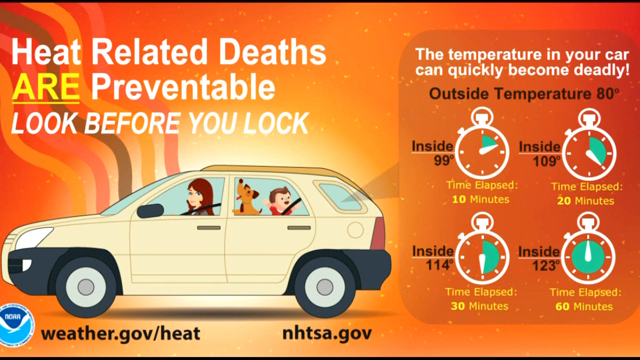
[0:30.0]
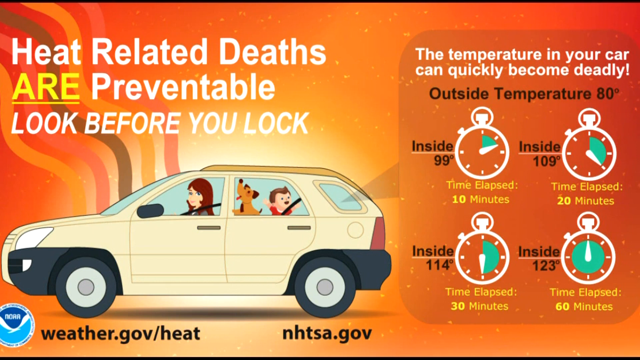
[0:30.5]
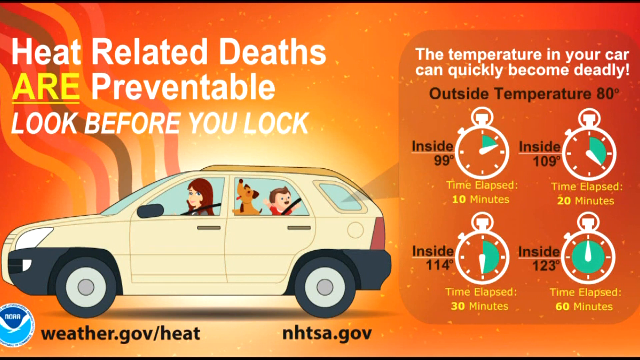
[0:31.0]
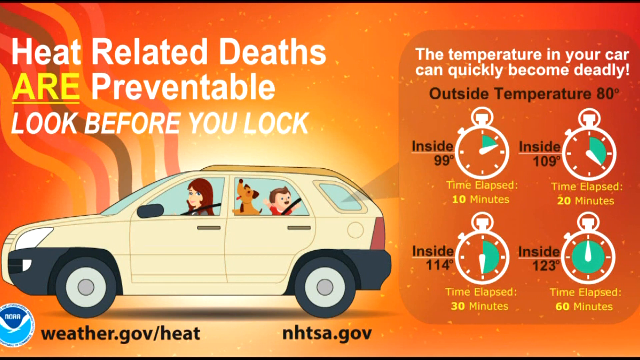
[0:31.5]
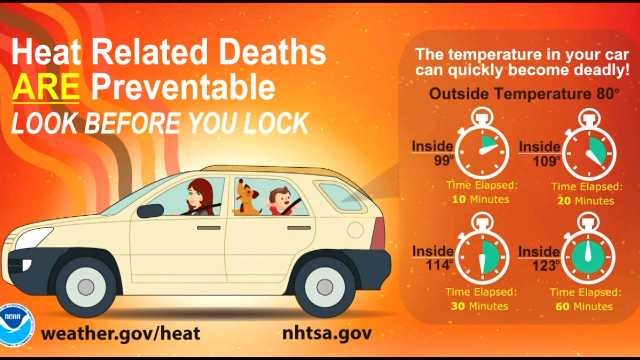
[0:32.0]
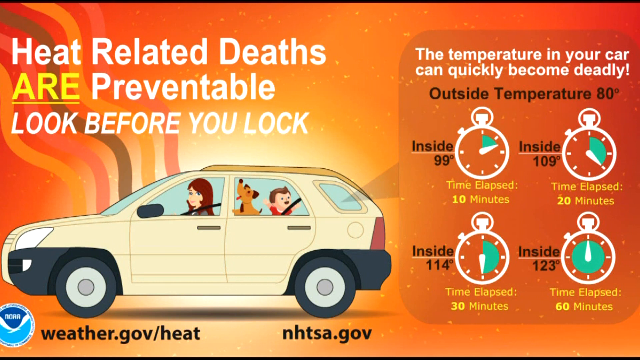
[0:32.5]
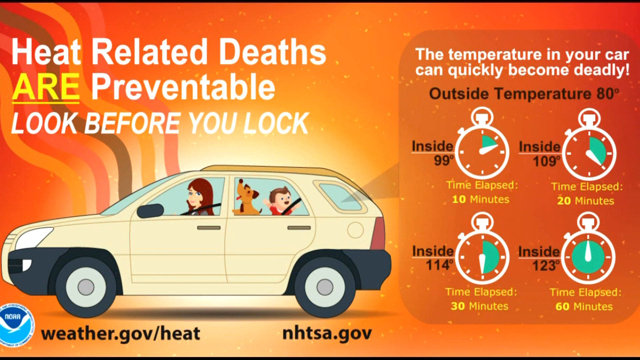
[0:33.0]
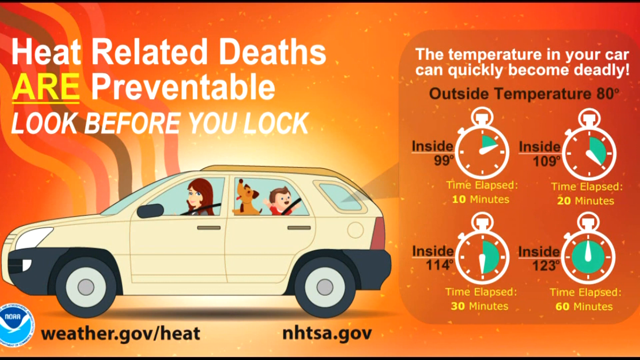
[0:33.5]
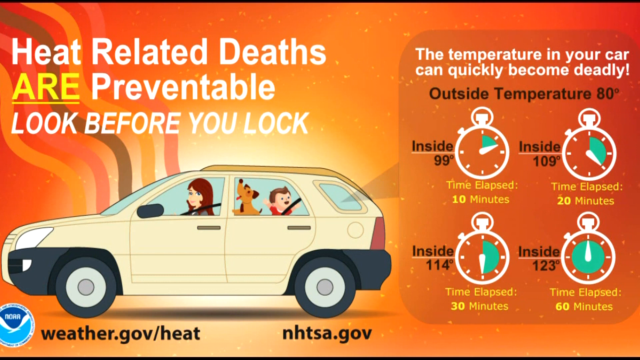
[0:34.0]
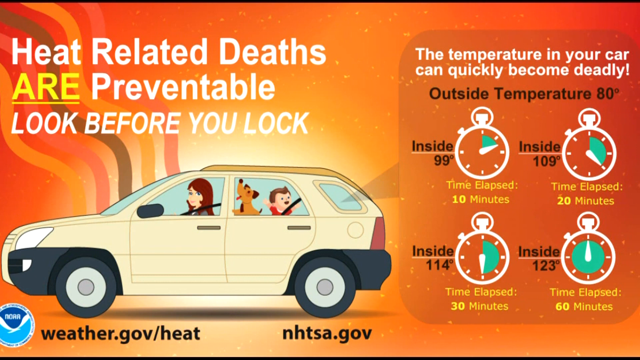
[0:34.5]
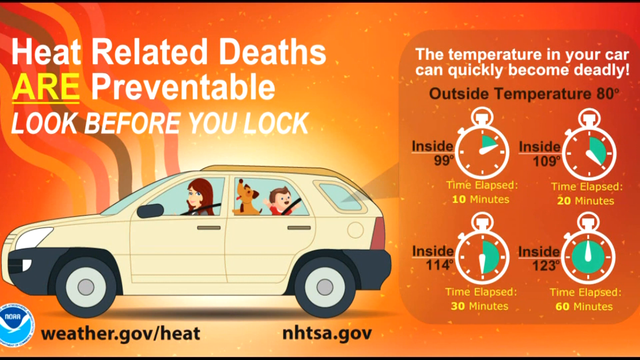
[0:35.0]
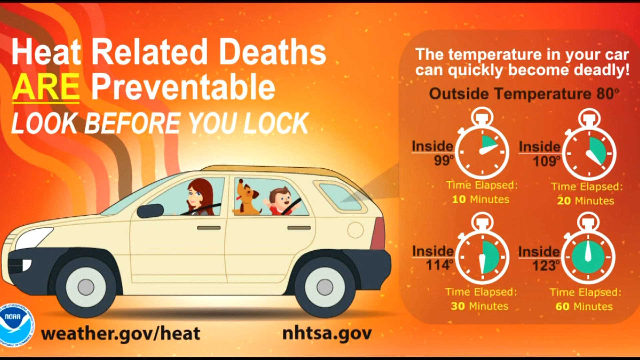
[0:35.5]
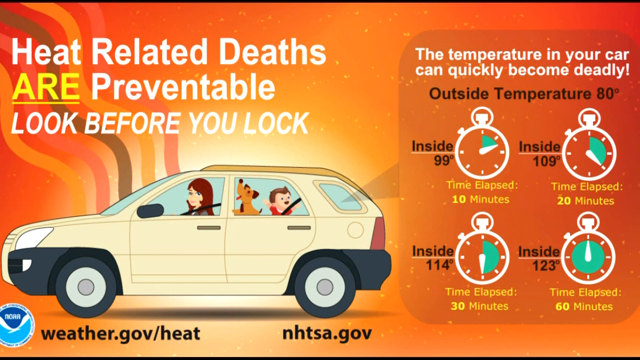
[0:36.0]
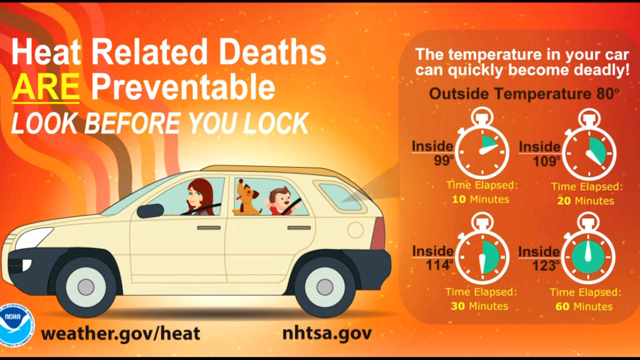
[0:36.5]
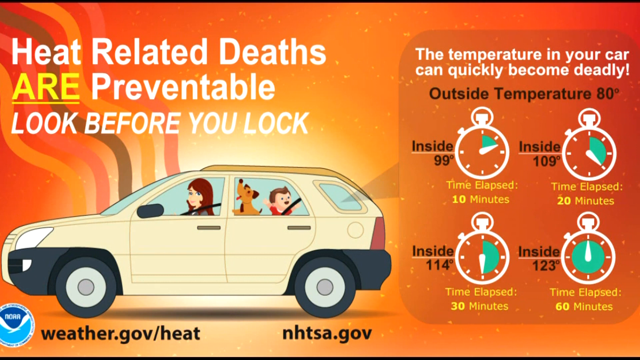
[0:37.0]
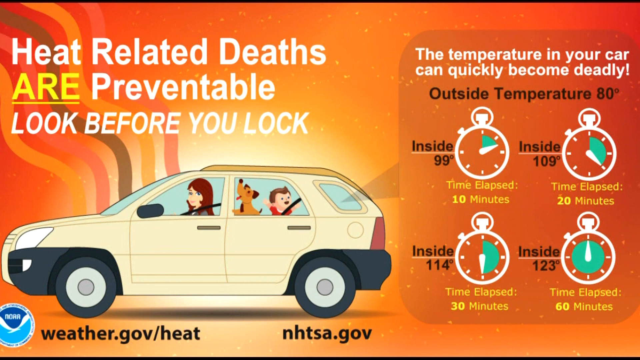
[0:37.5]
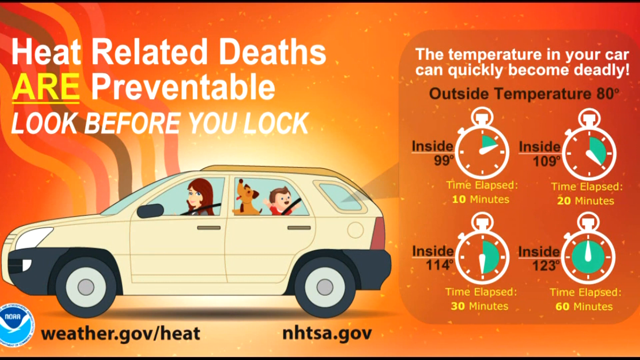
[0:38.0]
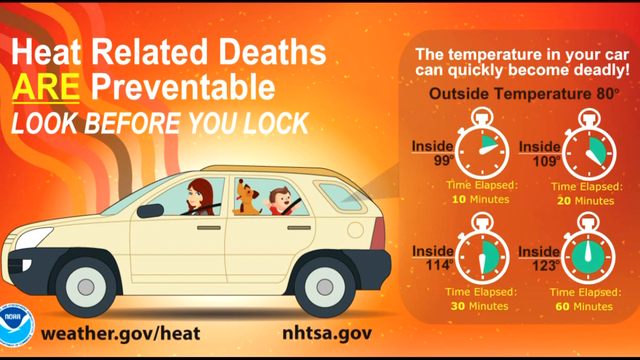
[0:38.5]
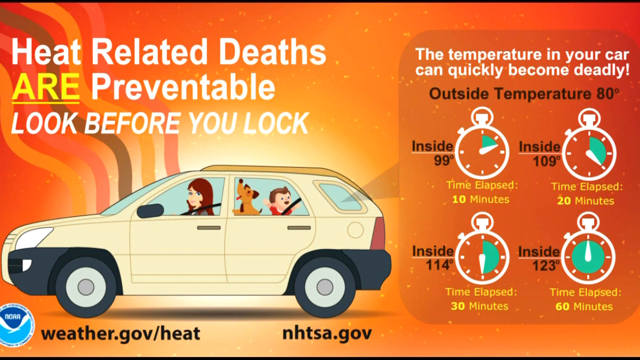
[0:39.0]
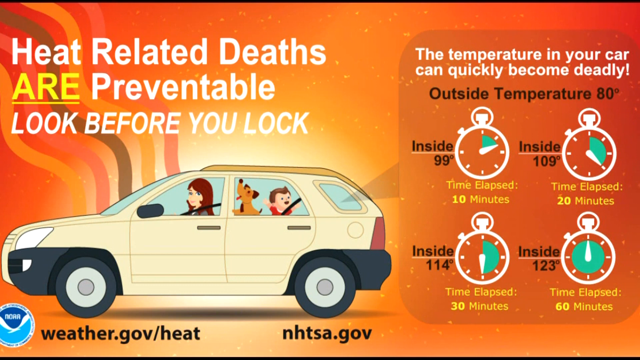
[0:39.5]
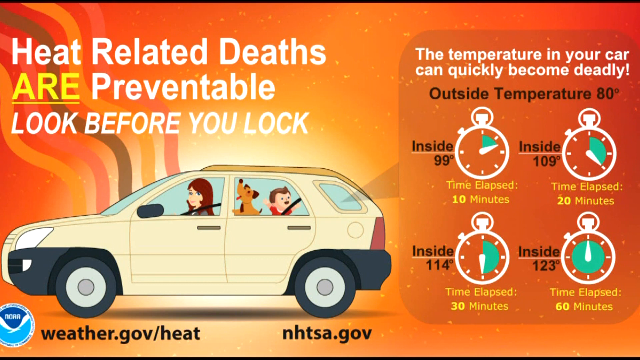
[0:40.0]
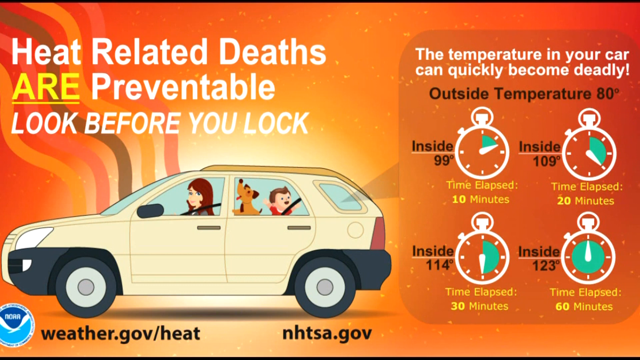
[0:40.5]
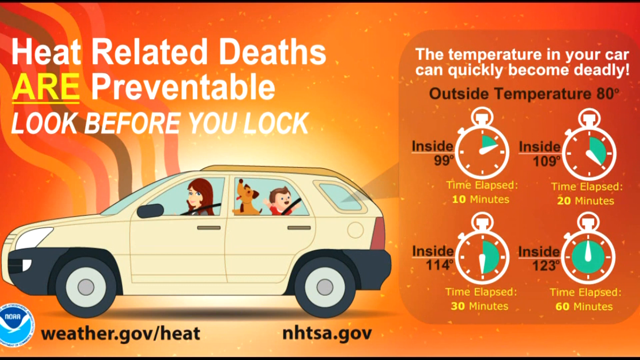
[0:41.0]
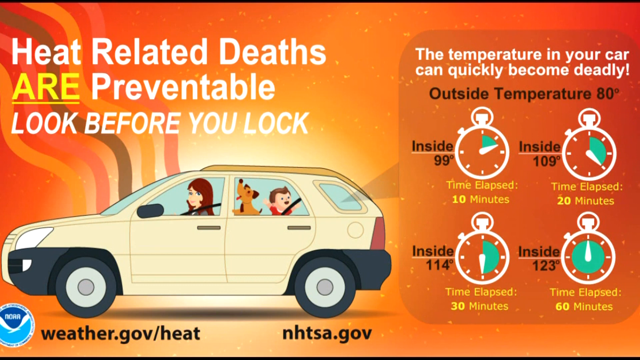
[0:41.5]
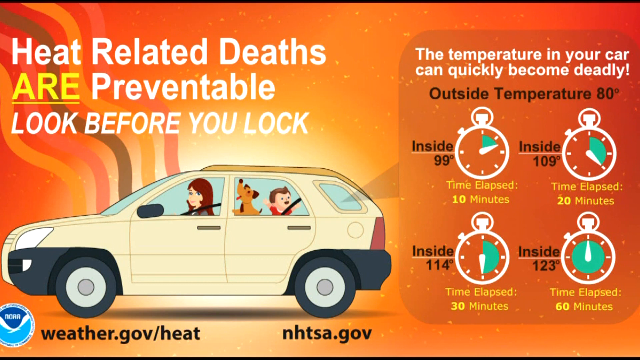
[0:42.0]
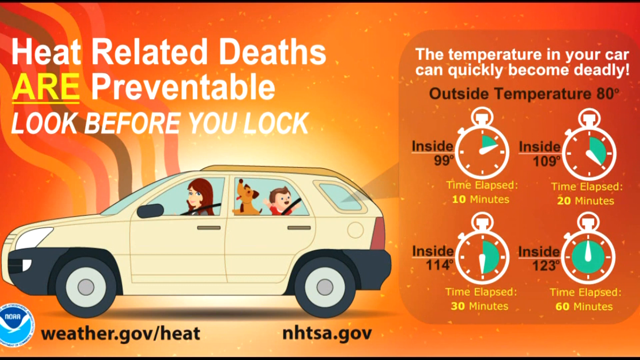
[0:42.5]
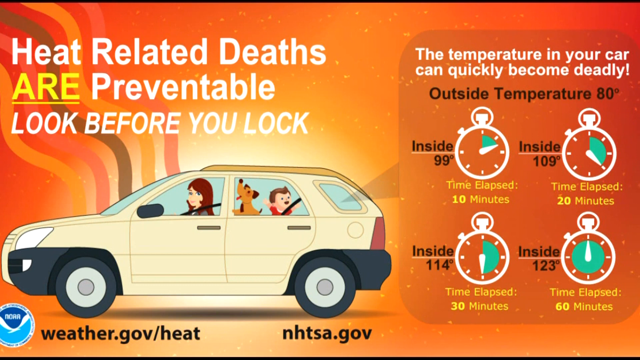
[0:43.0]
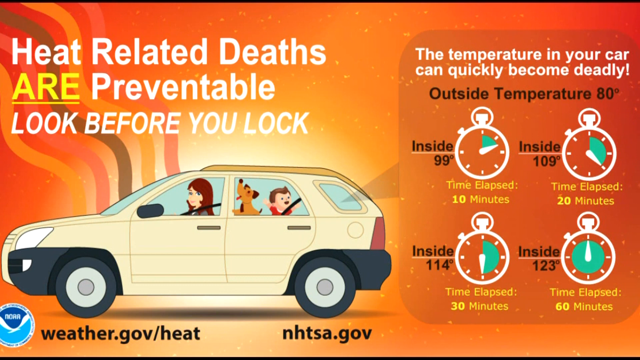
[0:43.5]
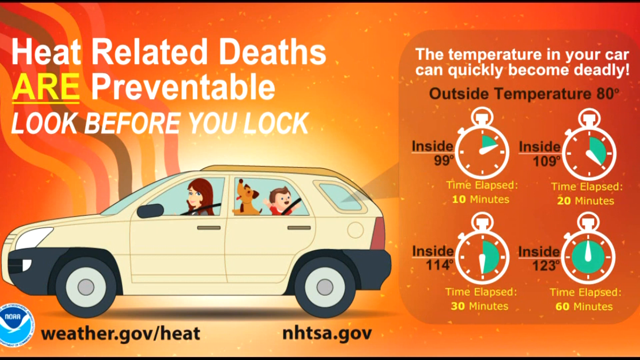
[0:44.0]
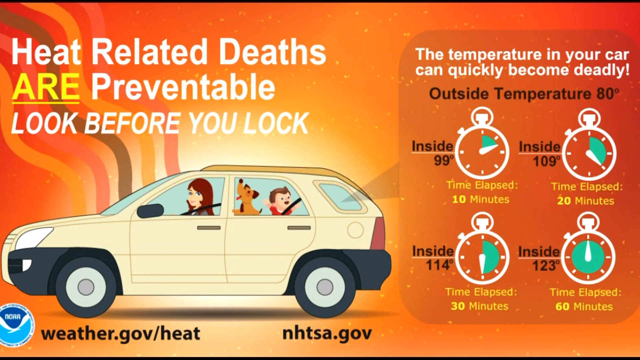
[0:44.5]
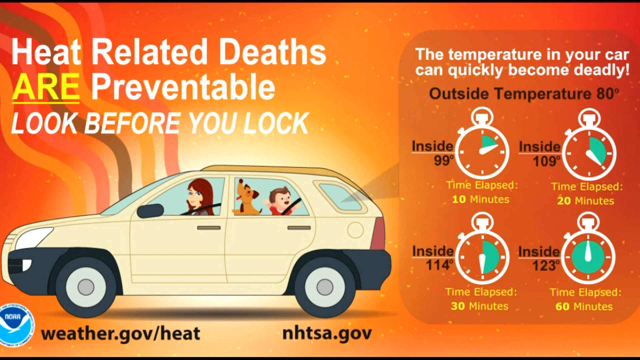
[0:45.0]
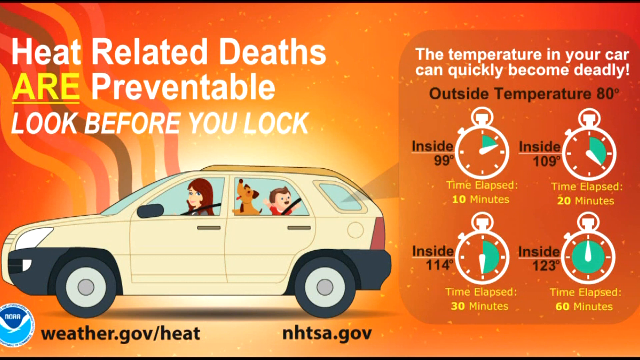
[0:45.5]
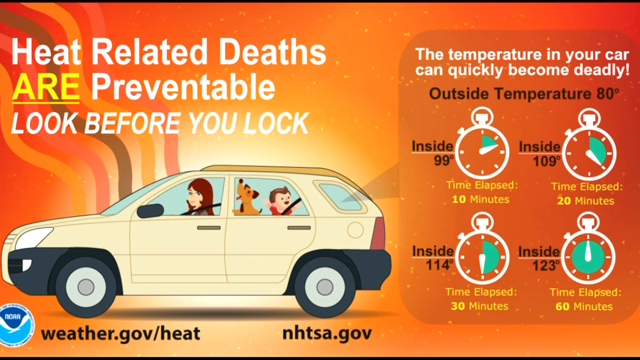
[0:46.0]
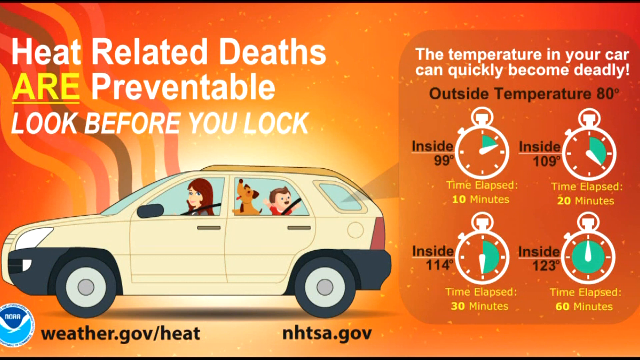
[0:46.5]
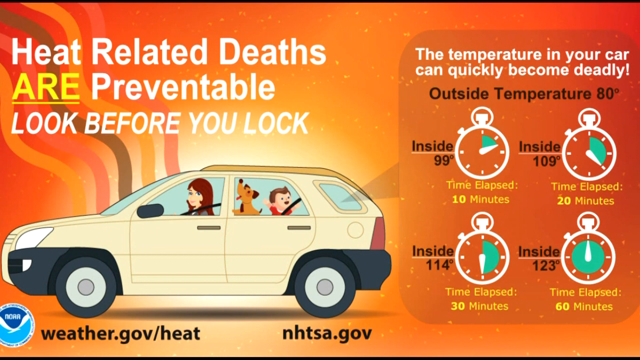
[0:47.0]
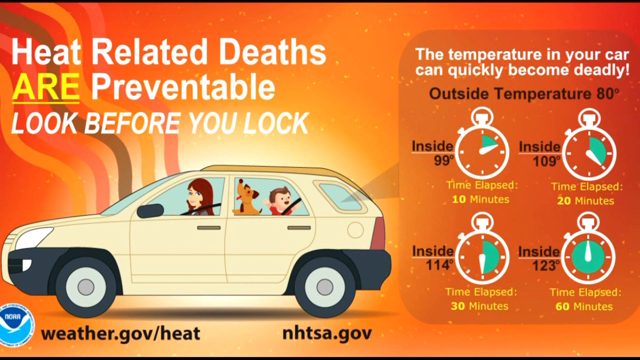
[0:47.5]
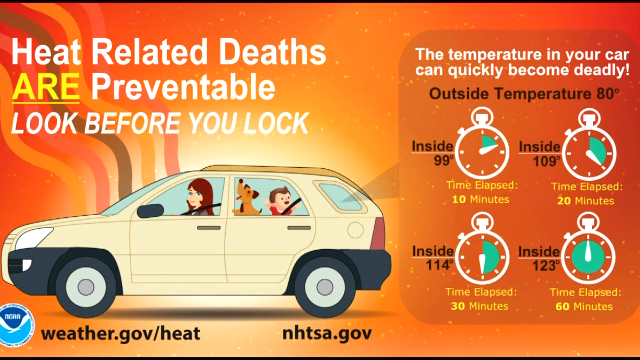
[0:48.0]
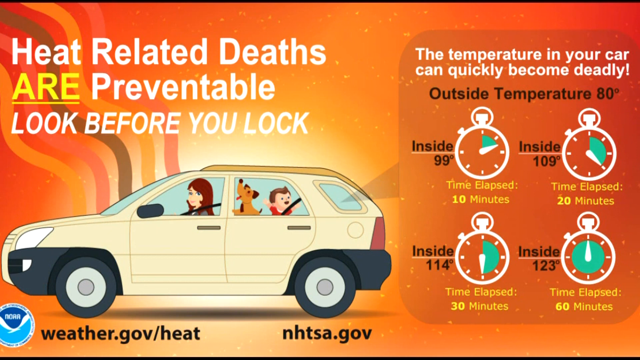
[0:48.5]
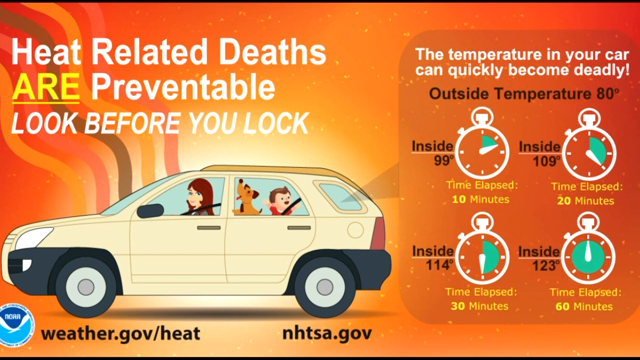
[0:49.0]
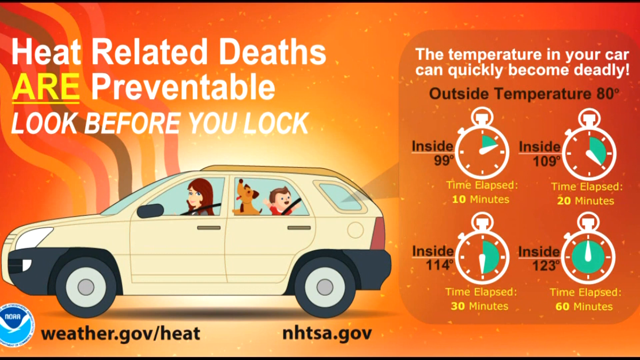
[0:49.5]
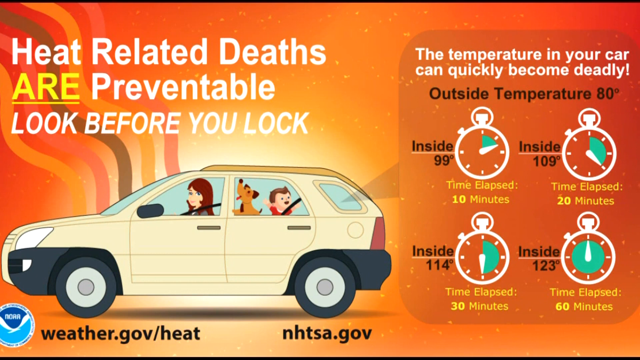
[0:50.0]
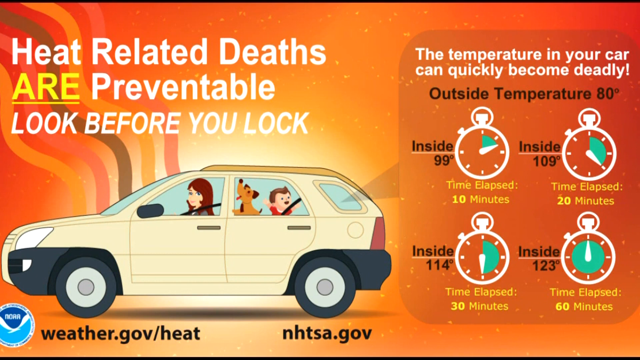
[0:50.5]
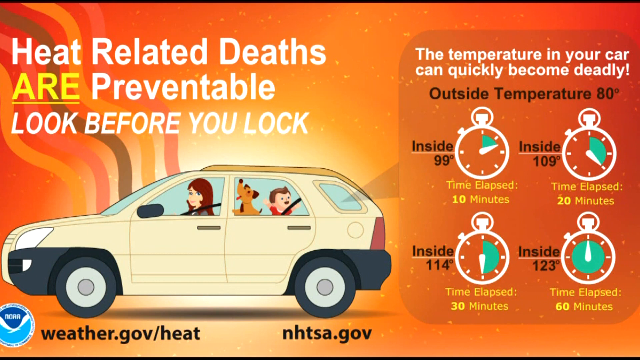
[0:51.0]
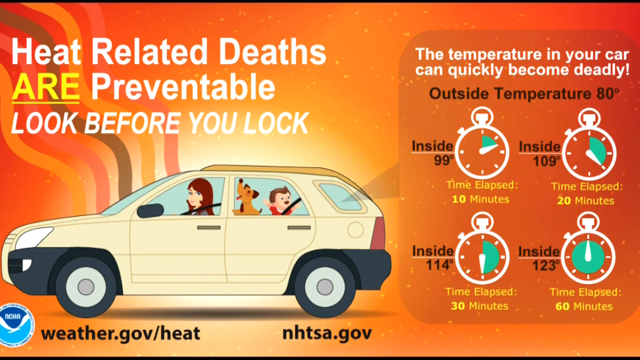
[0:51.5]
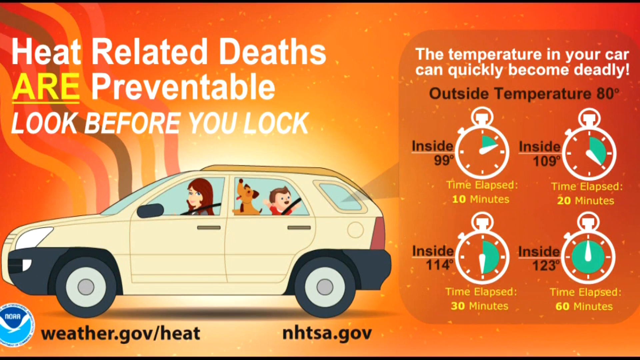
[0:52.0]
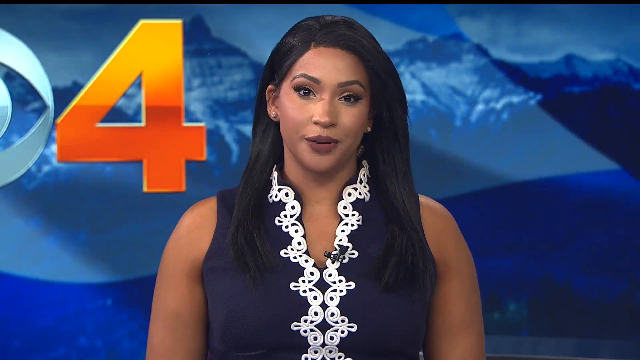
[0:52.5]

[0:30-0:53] A chart, a PSA, says "heat related deaths are preventable, look before you lock." At the bottom is a cartoon car, a yellow SUV, with a woman driving and a child and a dog in the back seat. On the right side, white letters say "the temperatures in your car can quickly become deadly," followed by different time periods: with an outside temperature of 80 degrees, the inside of the car reaches 99 degrees within 10 minutes, 109 after 20 minutes, 114 after 30 minutes, and 123 degrees after an hour. Everything is on an orange background, with big, bold letters. The video then cuts back to the news anchor, who has long dark hair and wears a blue and white vest, with a big orange 4 for Channel 4 News behind her.